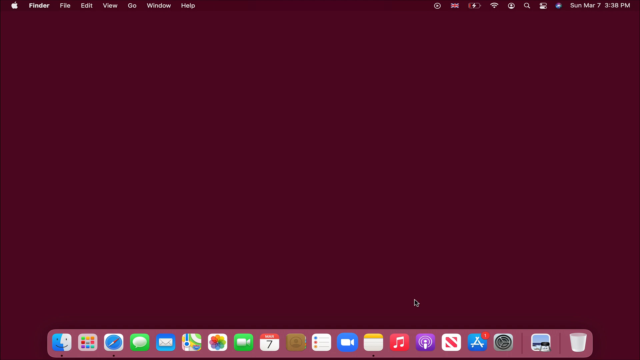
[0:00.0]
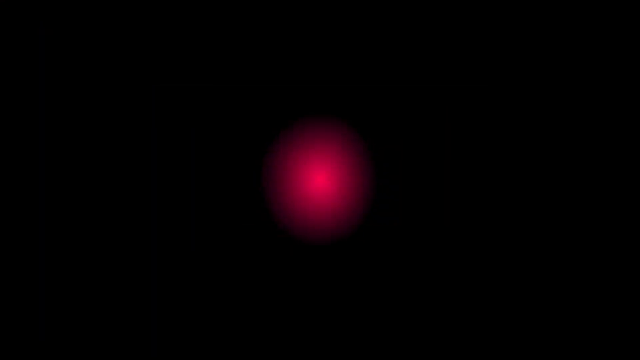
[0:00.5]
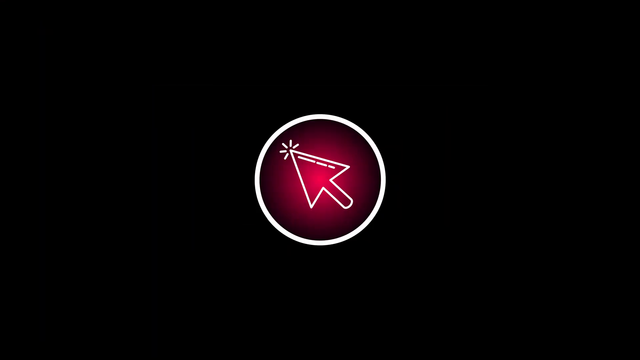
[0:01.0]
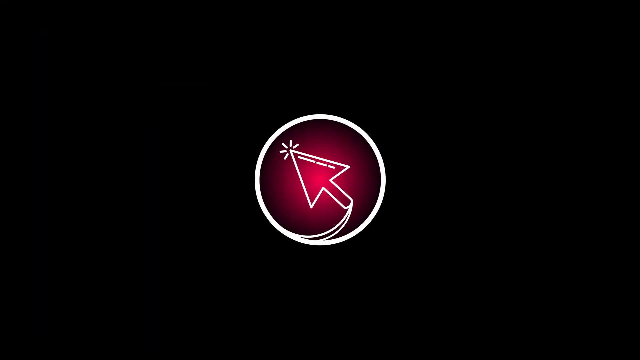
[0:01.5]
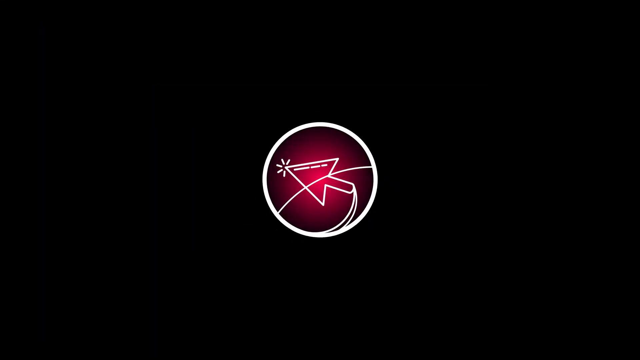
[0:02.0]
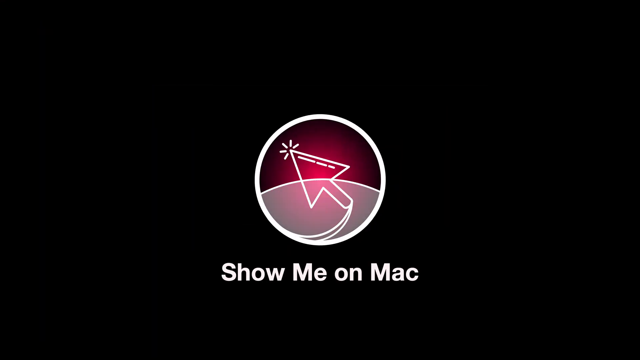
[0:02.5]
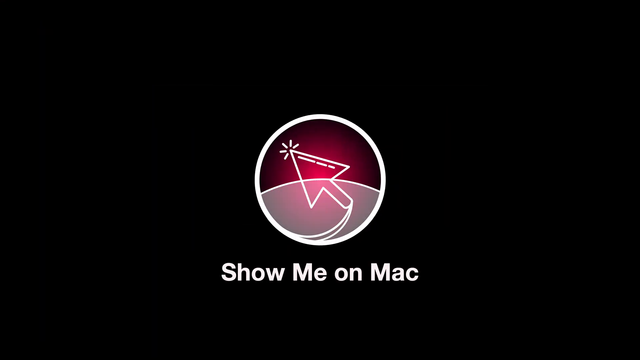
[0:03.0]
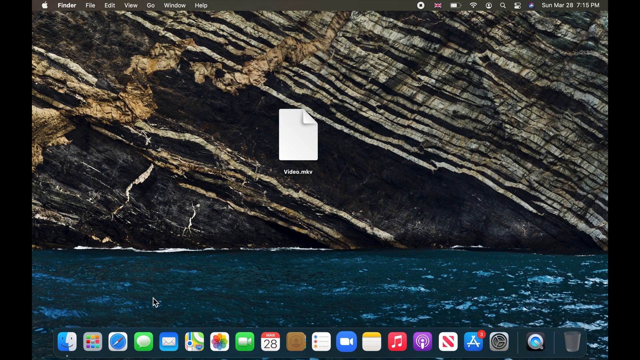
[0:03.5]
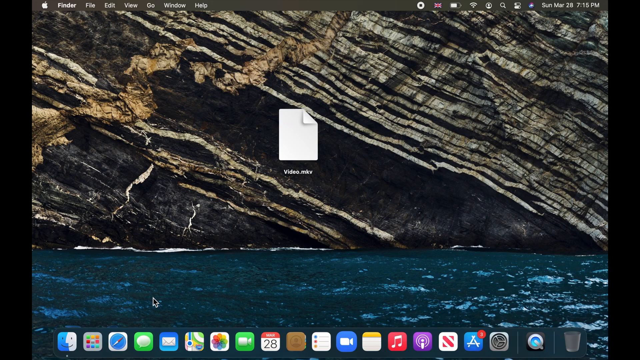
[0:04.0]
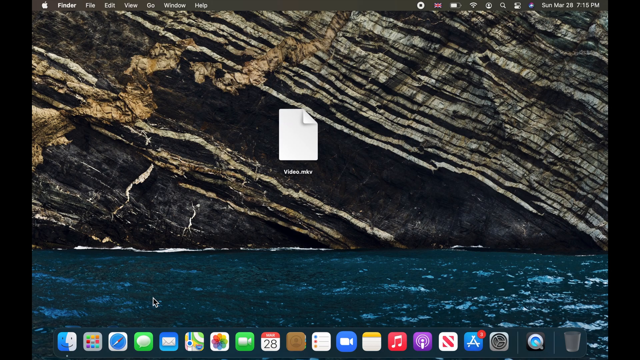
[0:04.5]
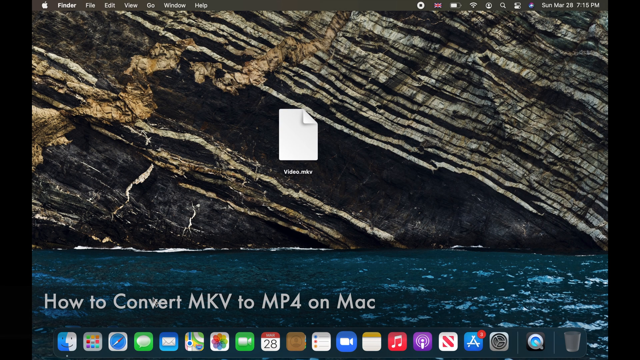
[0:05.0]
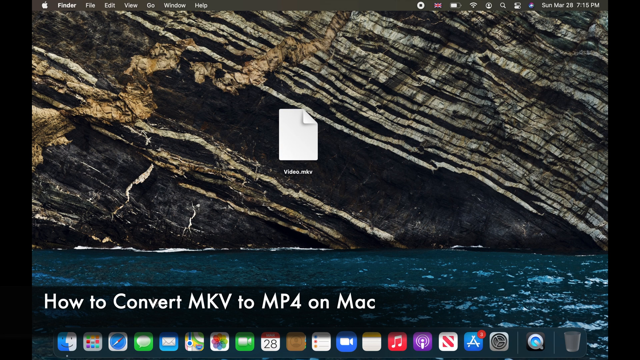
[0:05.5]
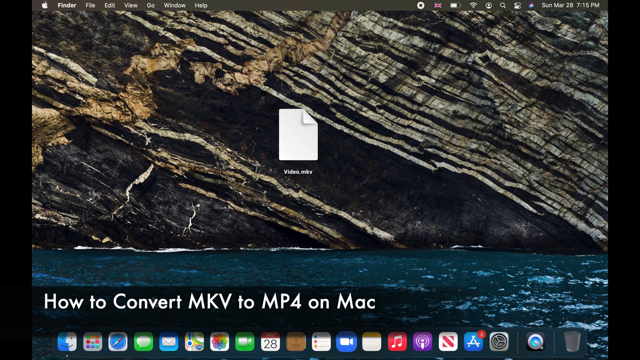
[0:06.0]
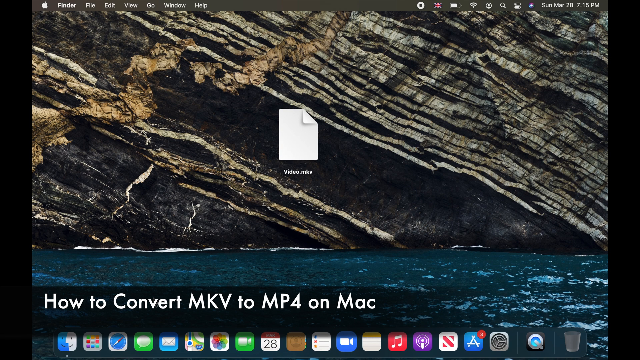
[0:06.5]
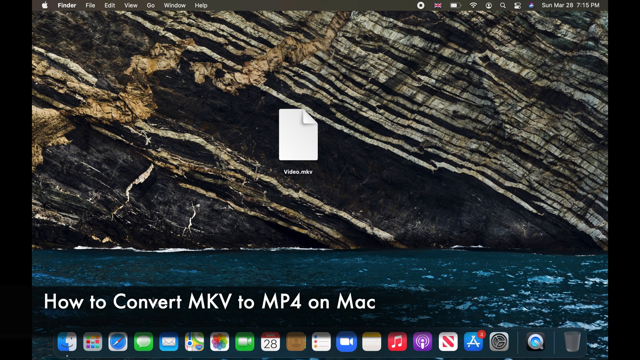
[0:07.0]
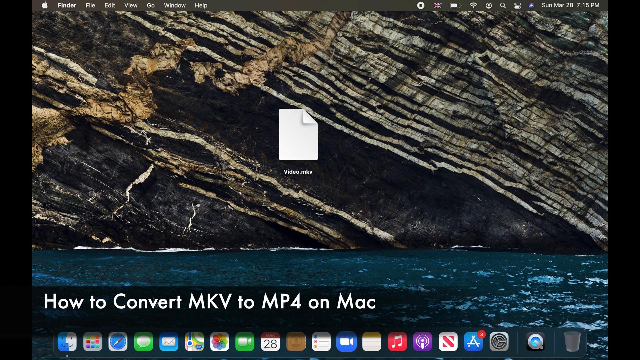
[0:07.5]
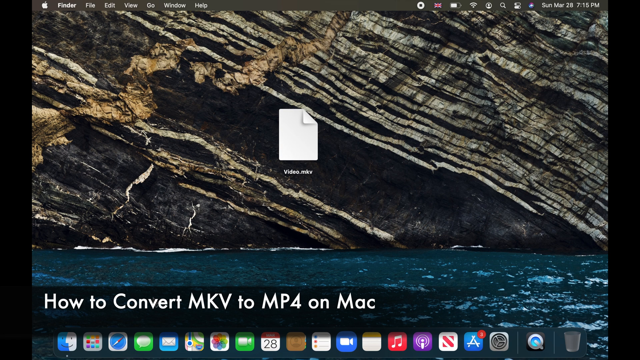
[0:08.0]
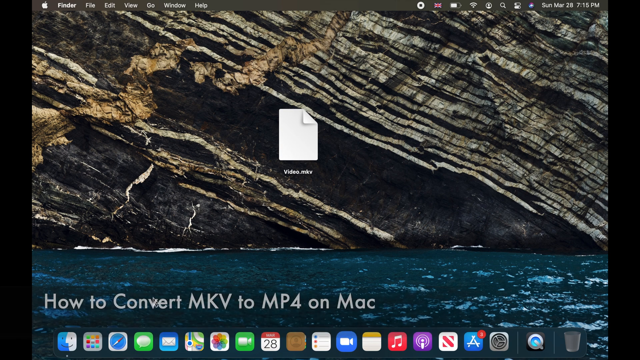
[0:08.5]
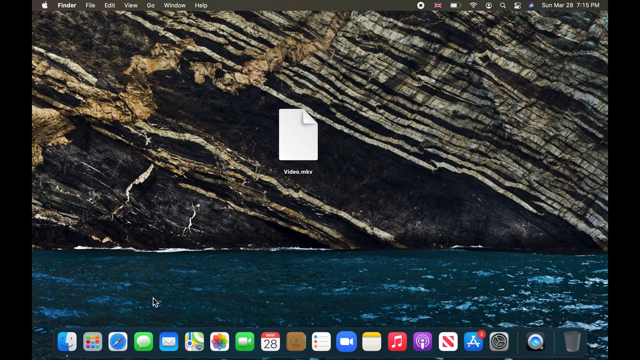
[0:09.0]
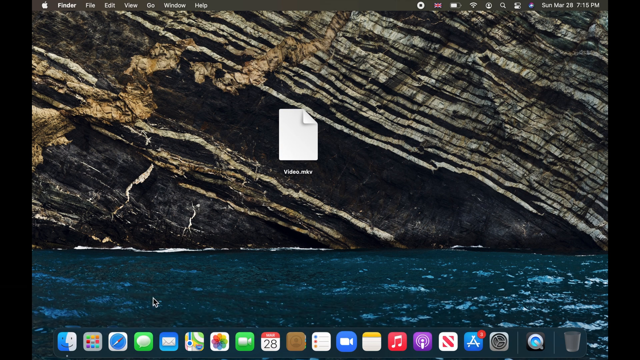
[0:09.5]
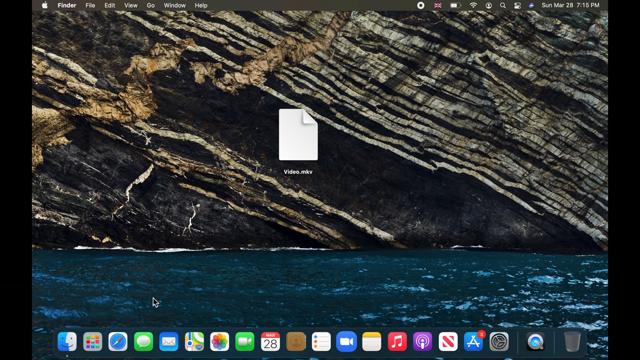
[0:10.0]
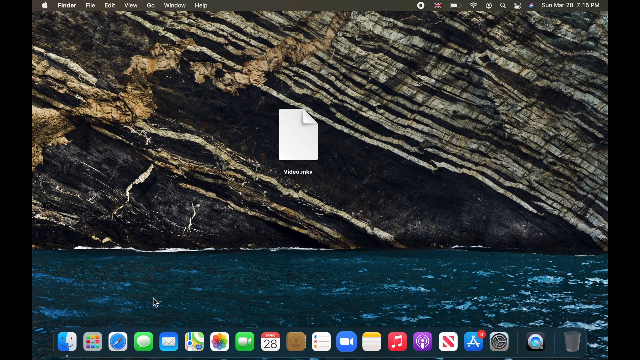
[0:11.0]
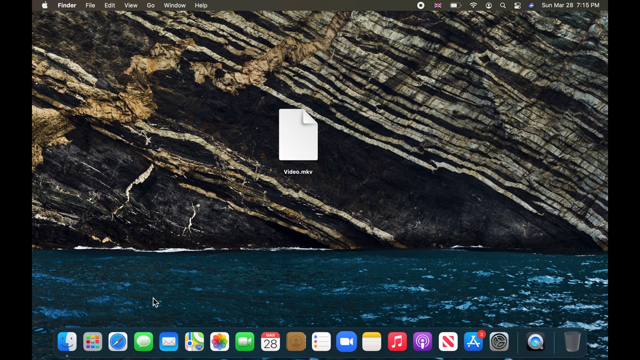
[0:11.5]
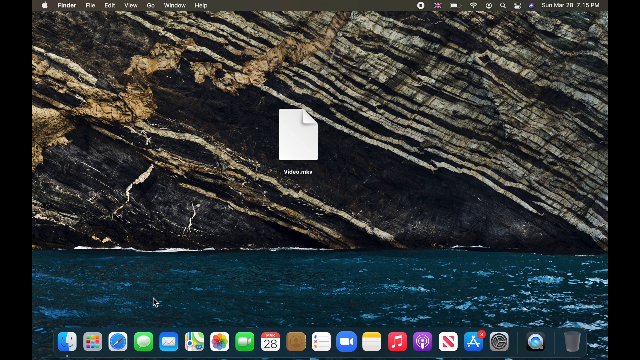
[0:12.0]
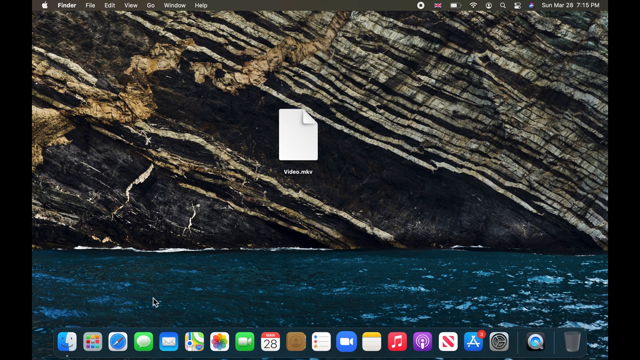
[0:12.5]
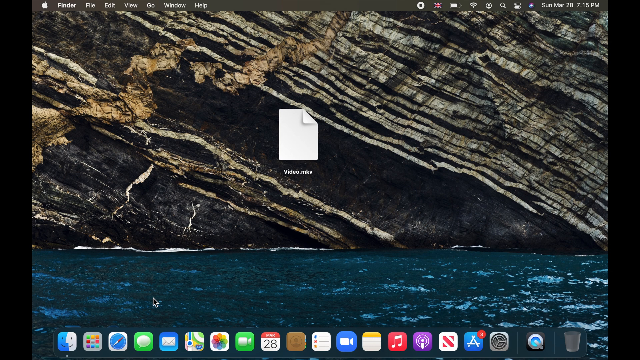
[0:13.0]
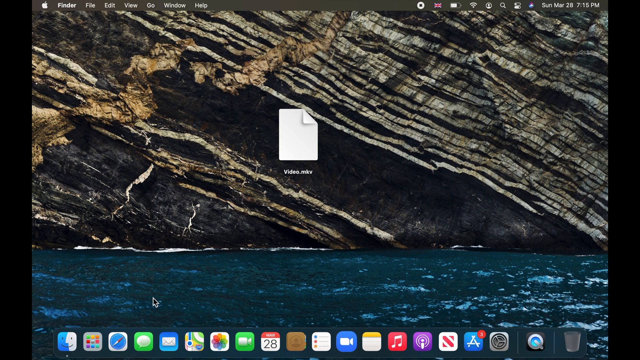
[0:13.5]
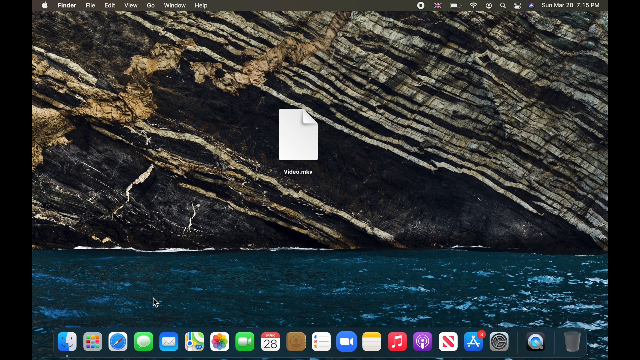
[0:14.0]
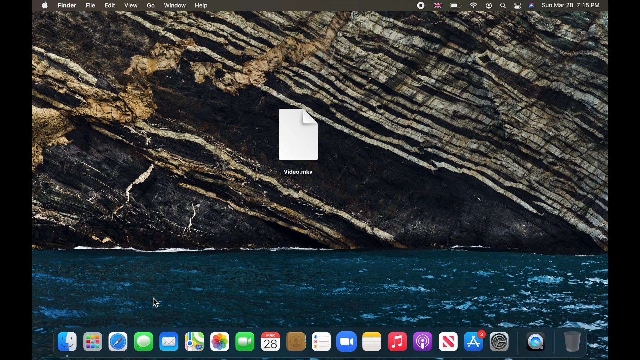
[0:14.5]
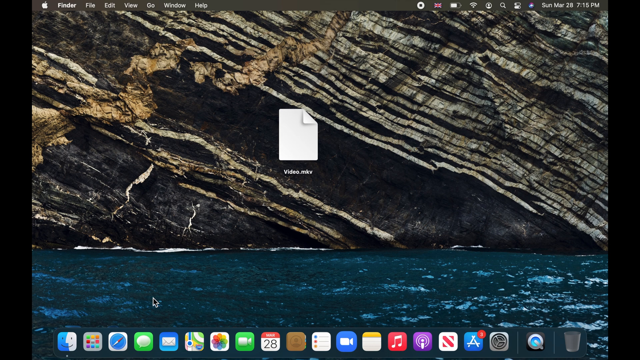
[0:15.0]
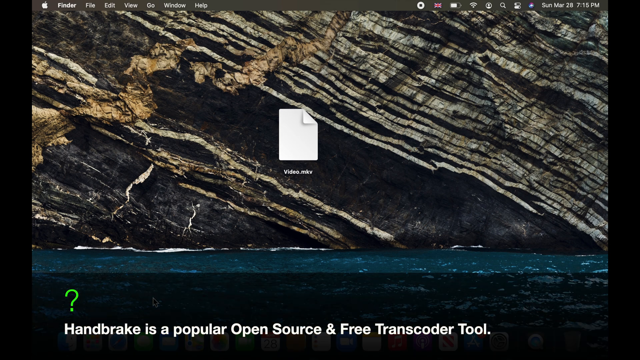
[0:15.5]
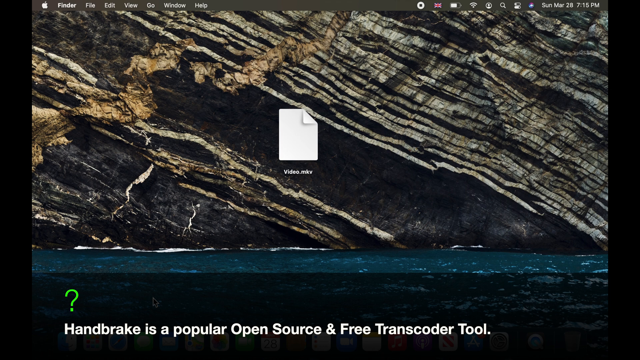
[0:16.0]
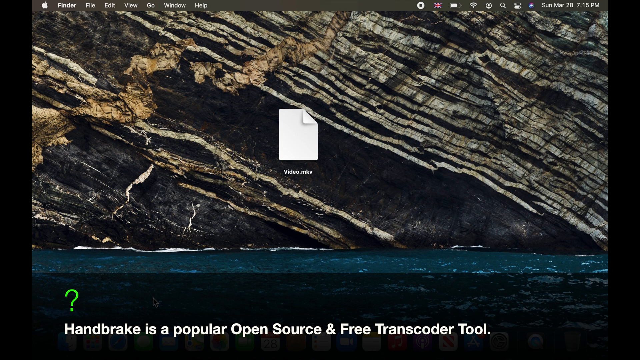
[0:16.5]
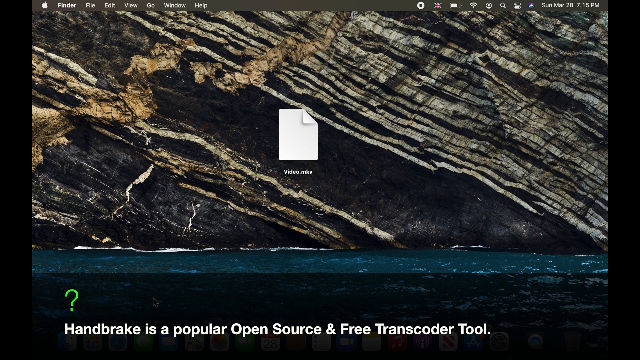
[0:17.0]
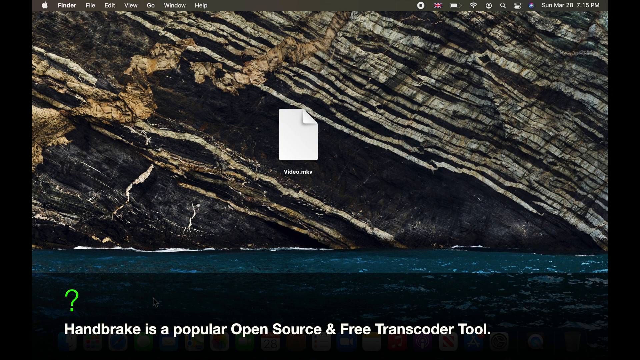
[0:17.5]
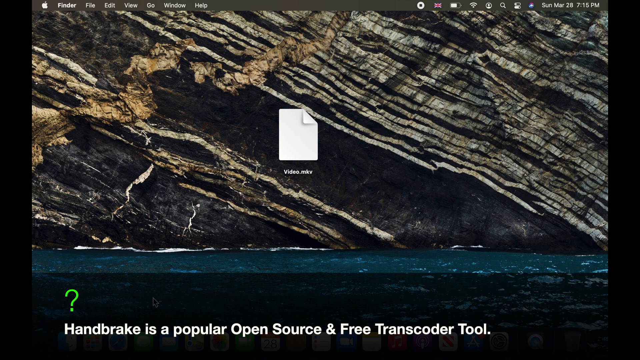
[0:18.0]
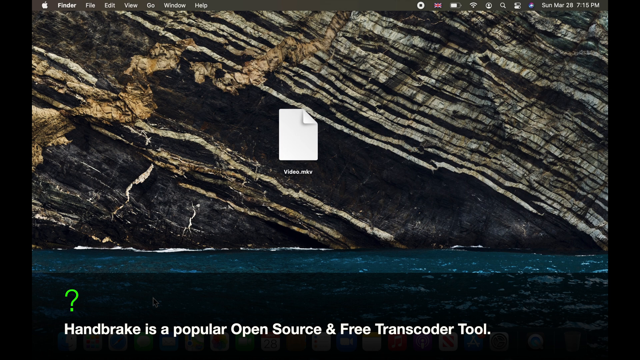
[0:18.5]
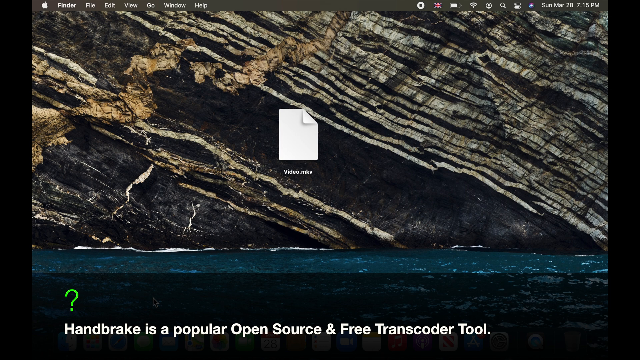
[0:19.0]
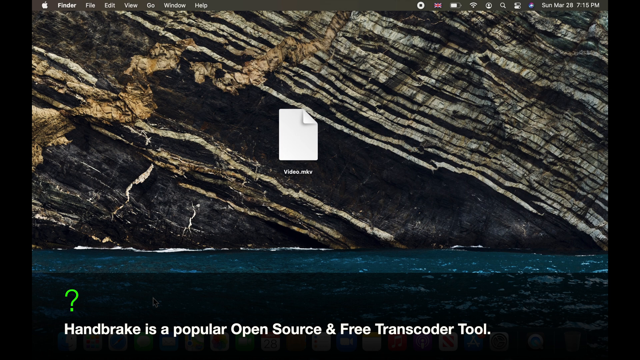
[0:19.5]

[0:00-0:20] The video zooms in on a logo of an arrow pointing to the upper left-hand corner, with little lines coming out of its tip, inside a thin white circle. The background behind it is a blurred red and black. The logo sort of rotates around in a circle, and a line comes over in an arc over the top of the arrow. White text underneath the circle reads "show me on Mac." The scene then changes to a Mac desktop whose background looks like rocks, like a cliffside over some water. There is one file on the desktop, which looks like a white sheet with a corner pulled down; its name is not legible. On the bottom left-hand side, white text reads "how to convert MKV to MP4 on Mac." The screen stays on that background with nothing happening. Then a question mark appears in the left-hand corner along with hard-to-read text about Handbrake, beginning "Handbrake is a popular."